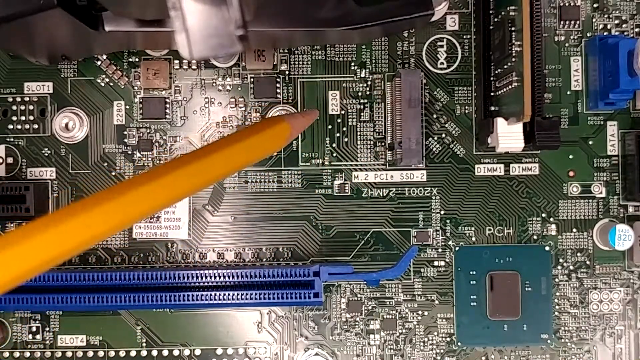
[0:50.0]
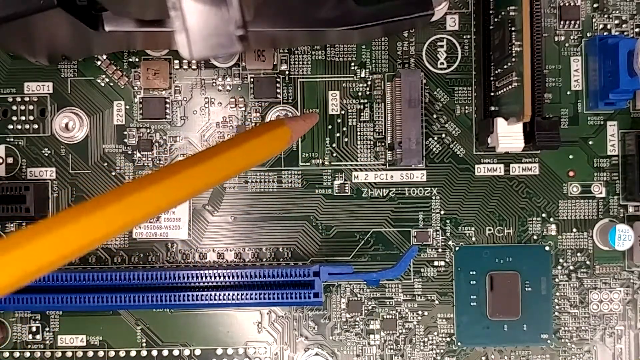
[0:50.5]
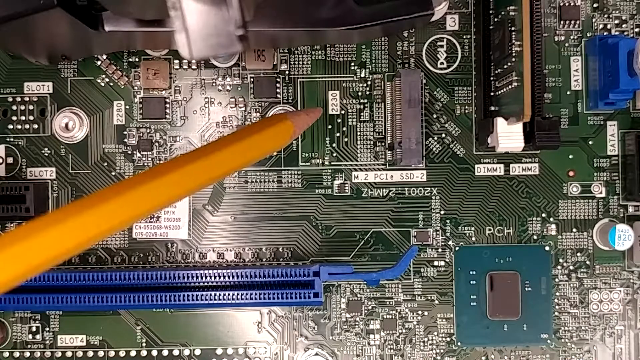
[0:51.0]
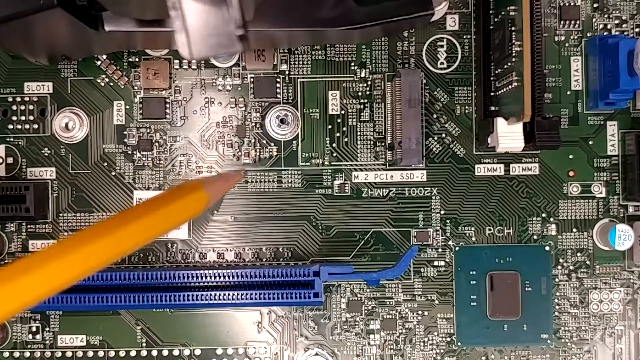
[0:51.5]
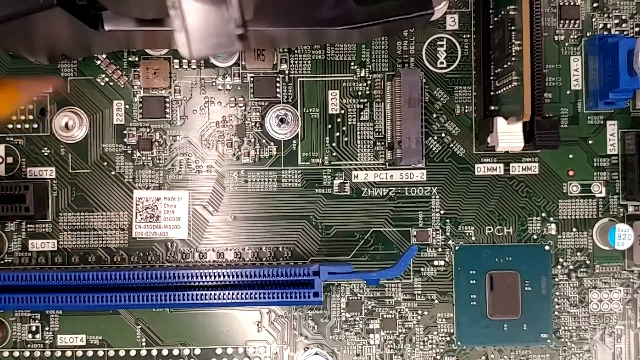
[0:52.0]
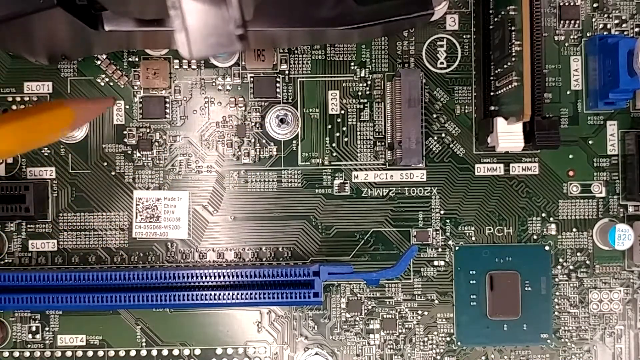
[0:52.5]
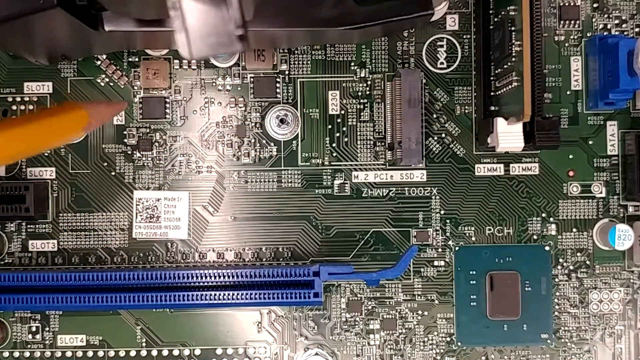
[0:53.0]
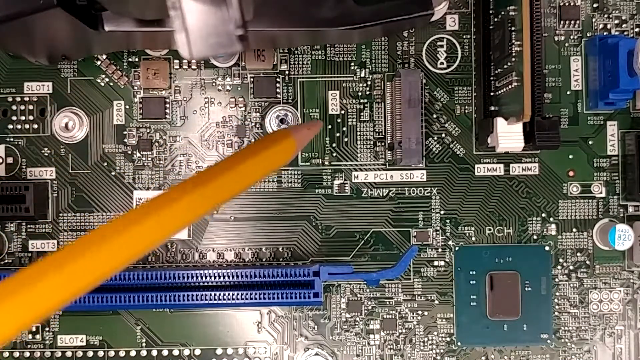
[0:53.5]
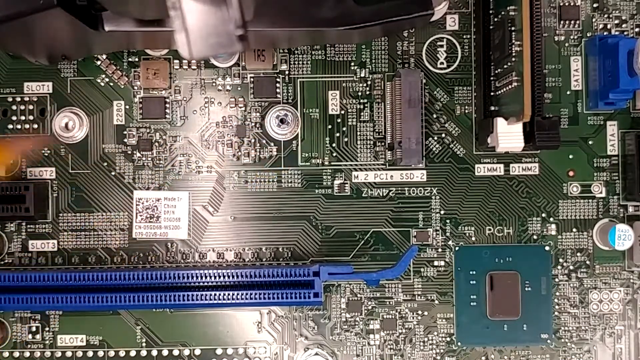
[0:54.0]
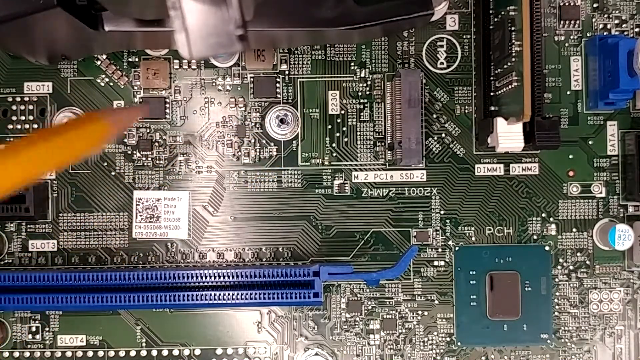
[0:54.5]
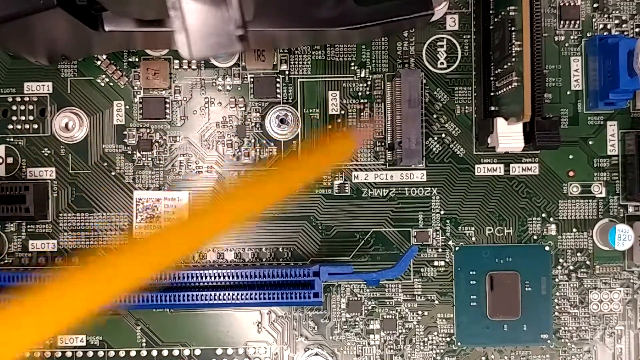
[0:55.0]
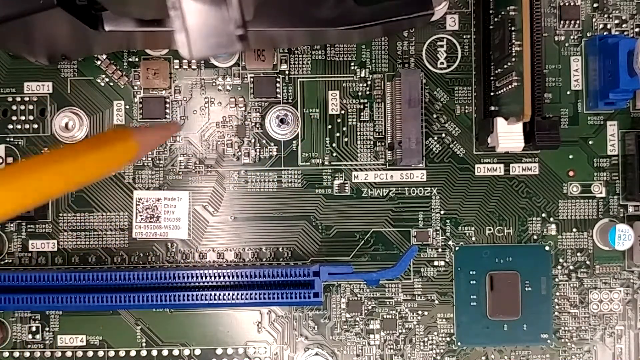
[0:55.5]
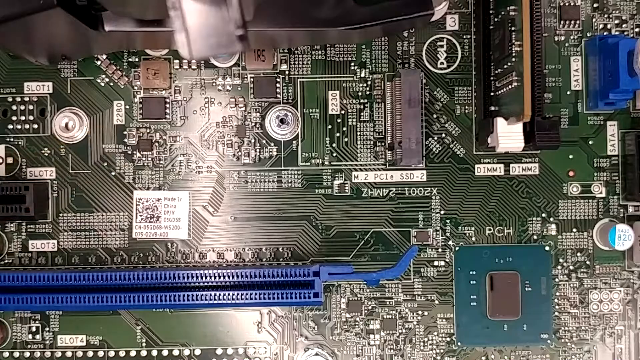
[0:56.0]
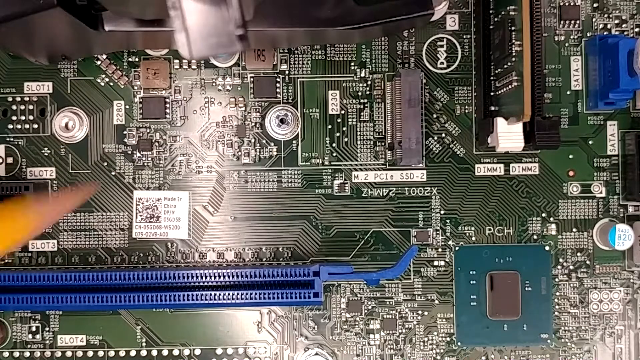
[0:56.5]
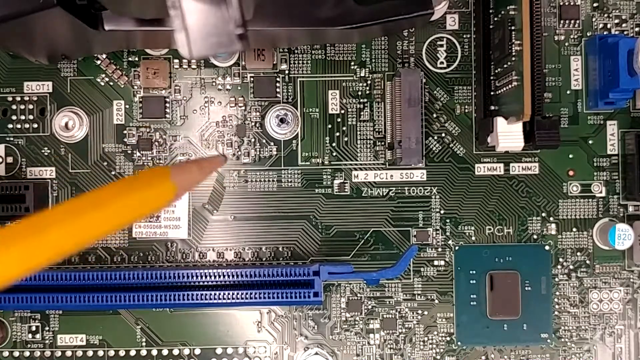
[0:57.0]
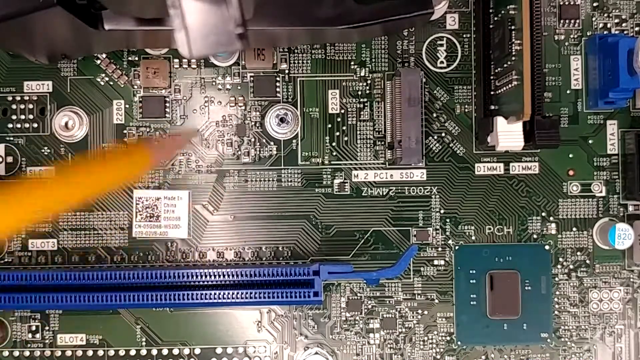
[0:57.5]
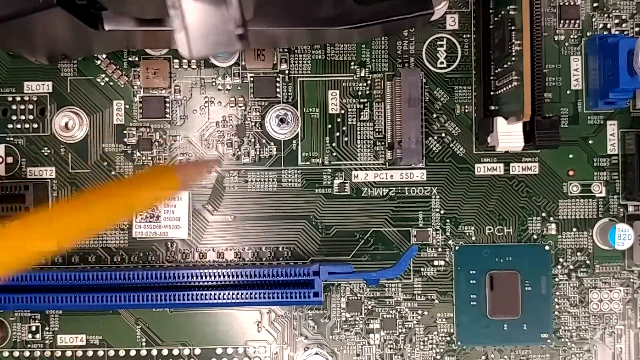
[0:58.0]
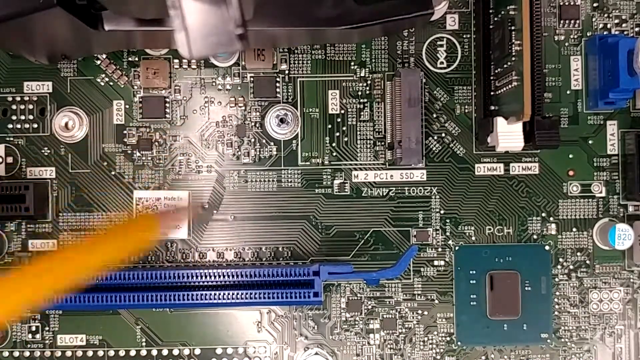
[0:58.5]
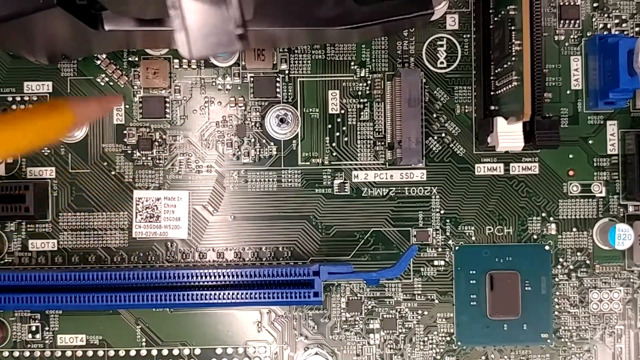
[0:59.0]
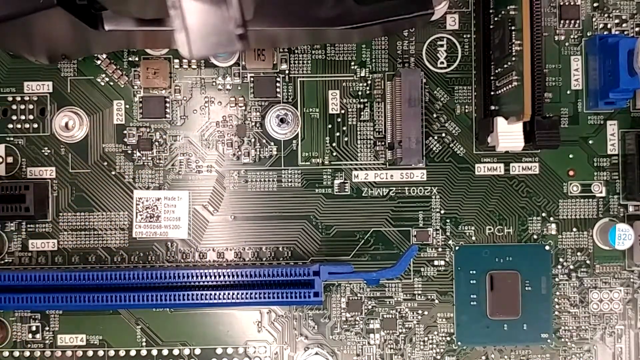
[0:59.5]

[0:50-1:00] A person is shown with what seems to be a set of circuits, possibly of a motherboard, clearly the internal workings of a computer. The Dell logo is near the right-hand side, and the pencil seems to point at a number that reads "2230". There is an area with borders in the shape of a square. The person moves to the left and points to another area, then brings the pencil back over to the area marked "2230" and weaves it back and forth, gesturing as if talking about it. The pencil then goes over to the "2280" side, and the area to the left of that has slots.